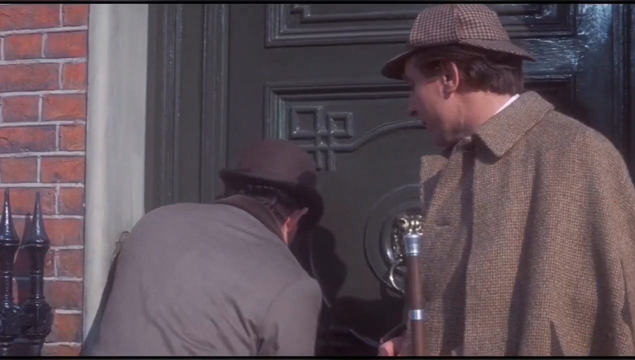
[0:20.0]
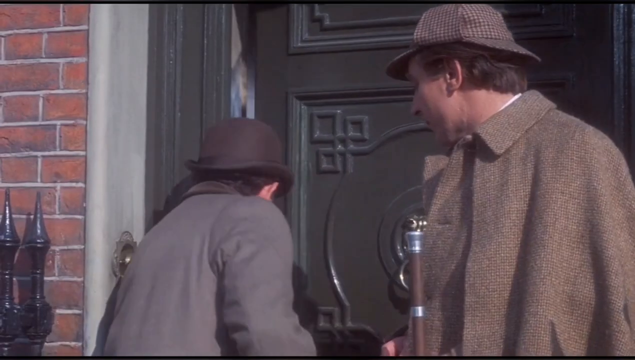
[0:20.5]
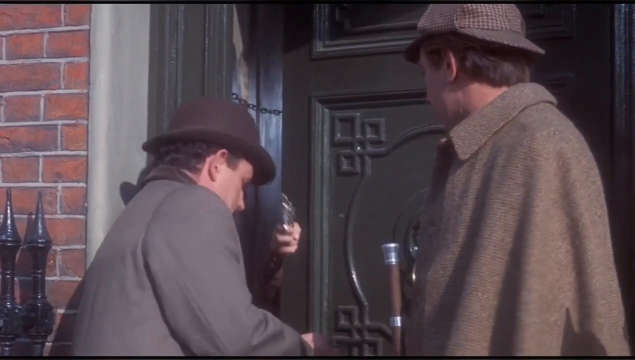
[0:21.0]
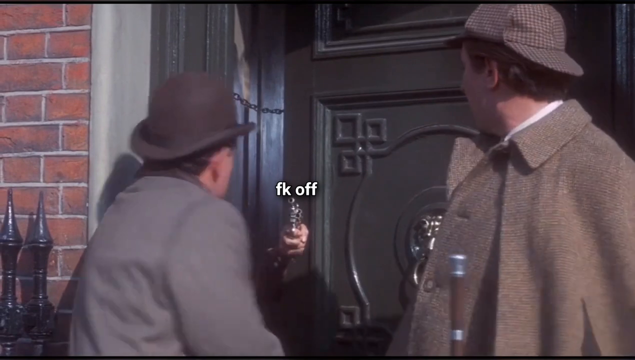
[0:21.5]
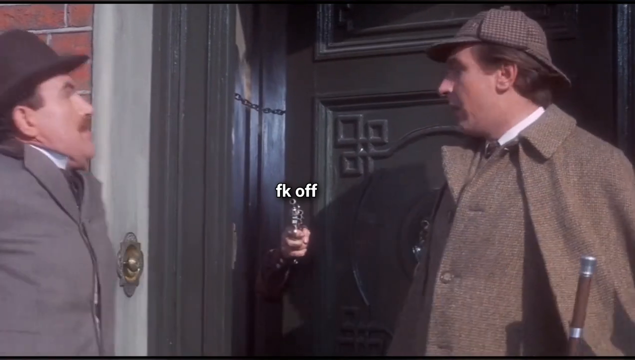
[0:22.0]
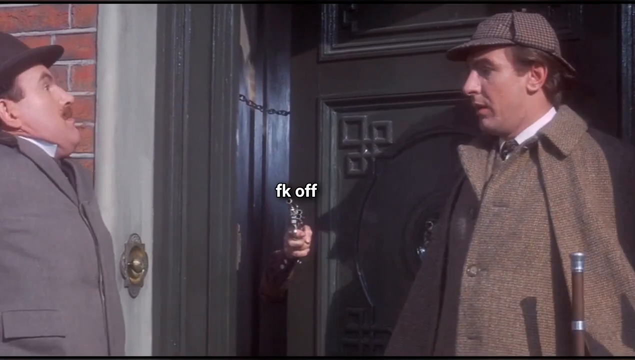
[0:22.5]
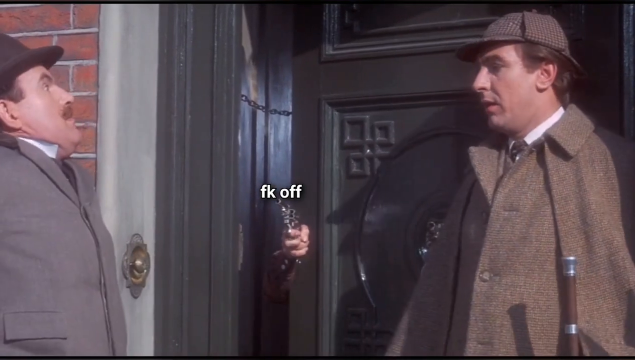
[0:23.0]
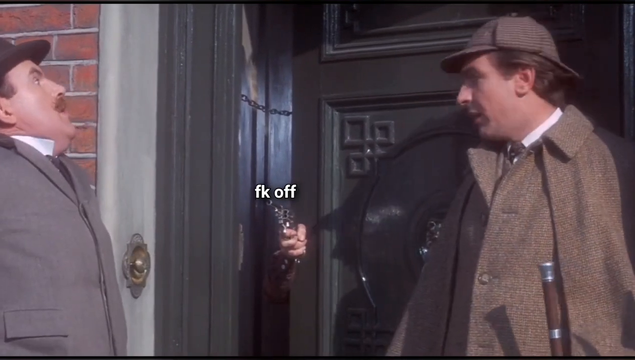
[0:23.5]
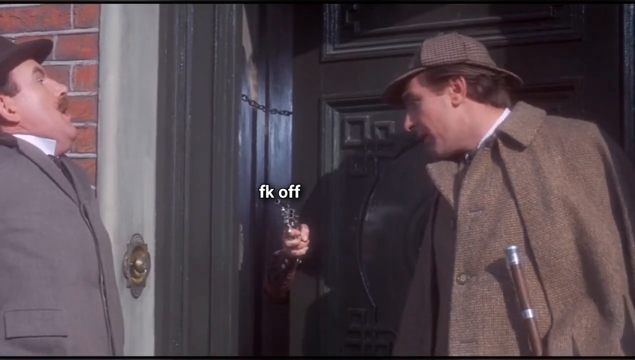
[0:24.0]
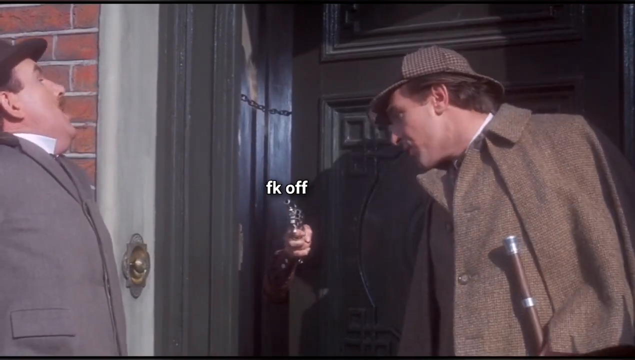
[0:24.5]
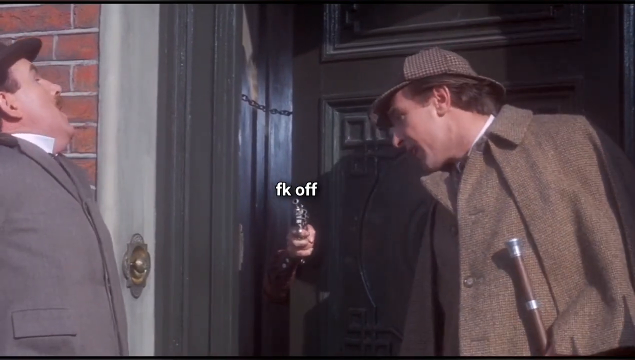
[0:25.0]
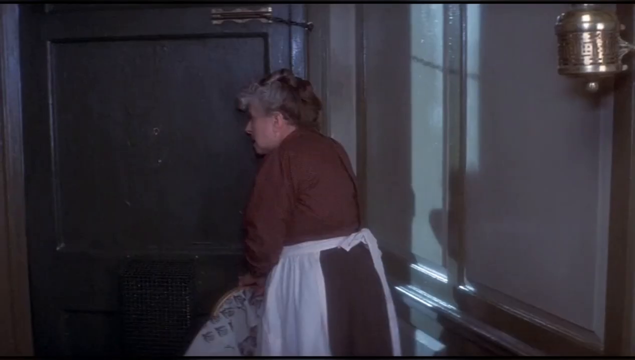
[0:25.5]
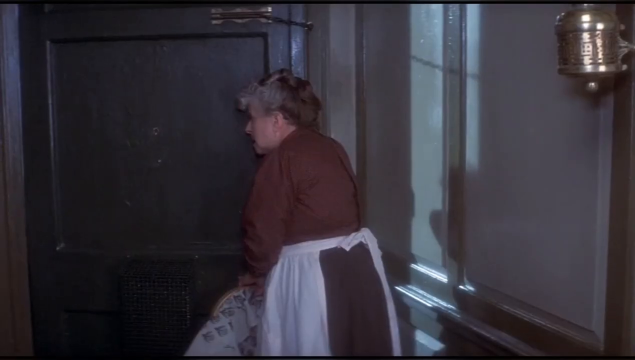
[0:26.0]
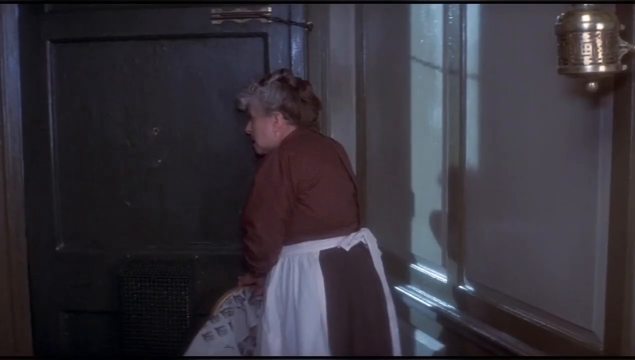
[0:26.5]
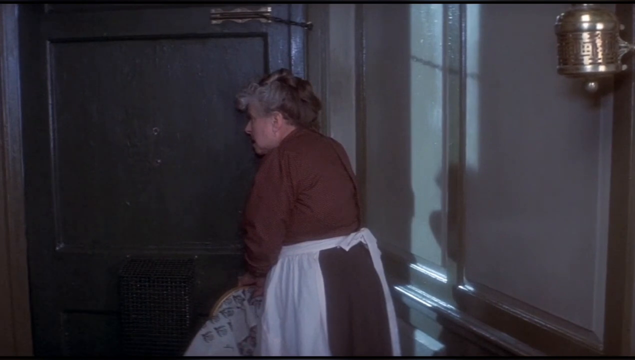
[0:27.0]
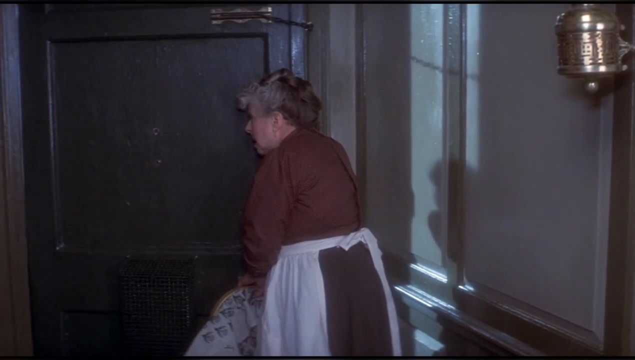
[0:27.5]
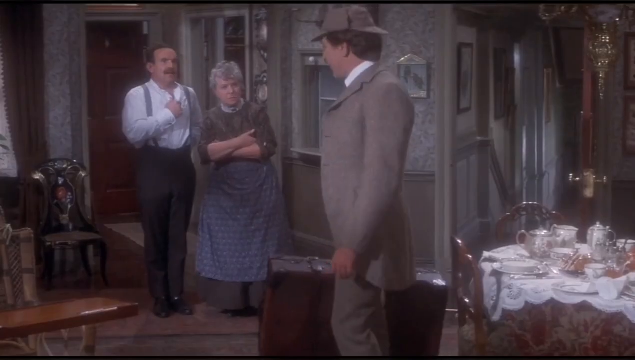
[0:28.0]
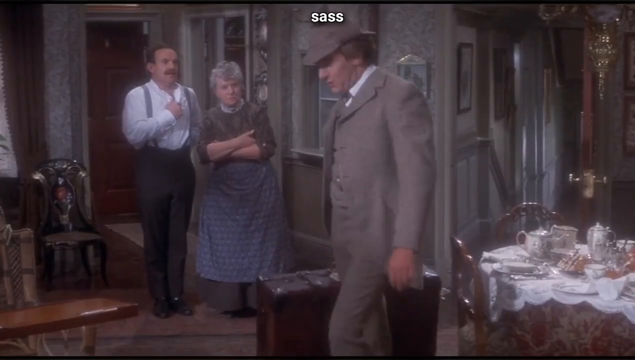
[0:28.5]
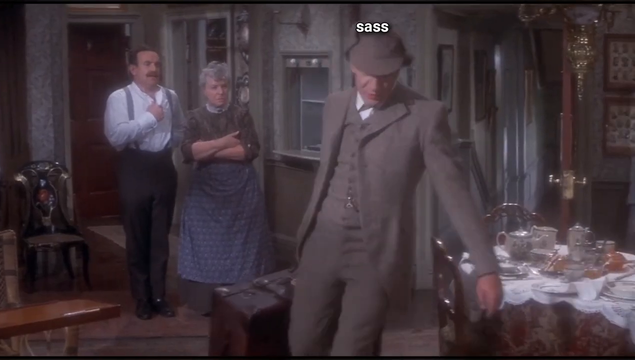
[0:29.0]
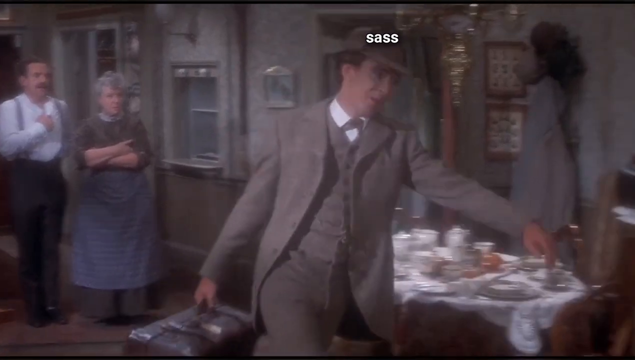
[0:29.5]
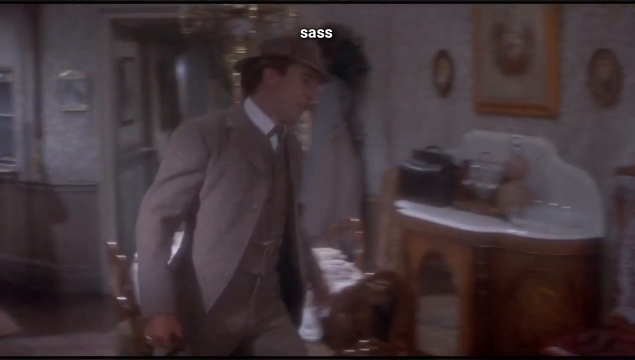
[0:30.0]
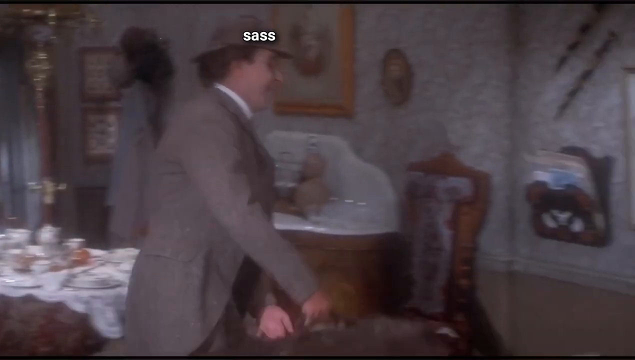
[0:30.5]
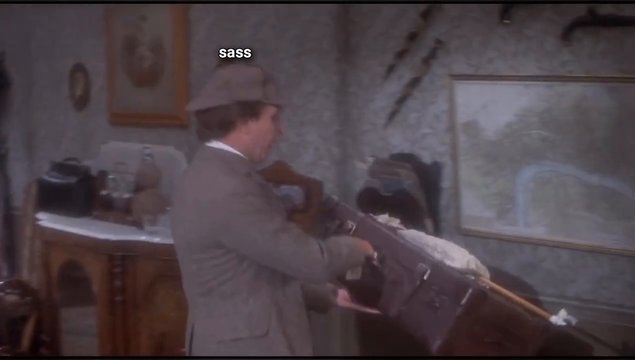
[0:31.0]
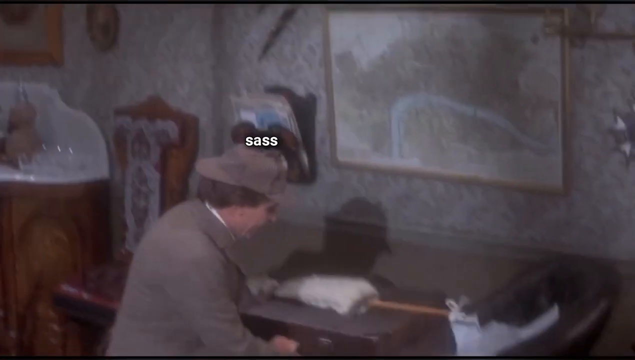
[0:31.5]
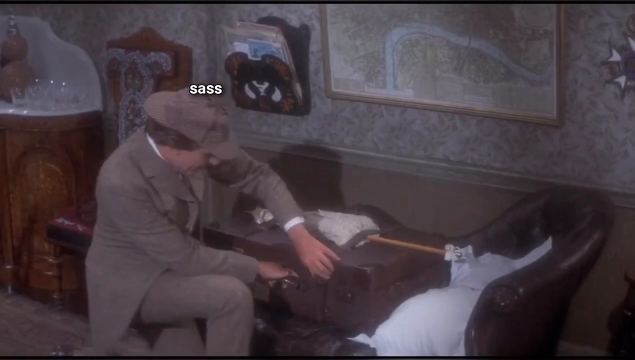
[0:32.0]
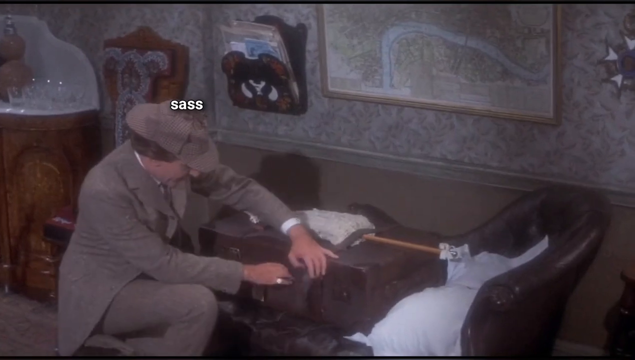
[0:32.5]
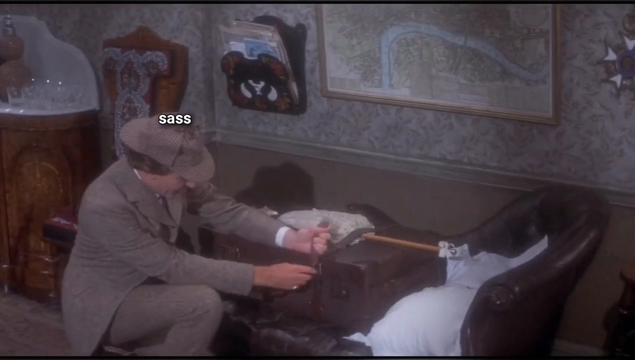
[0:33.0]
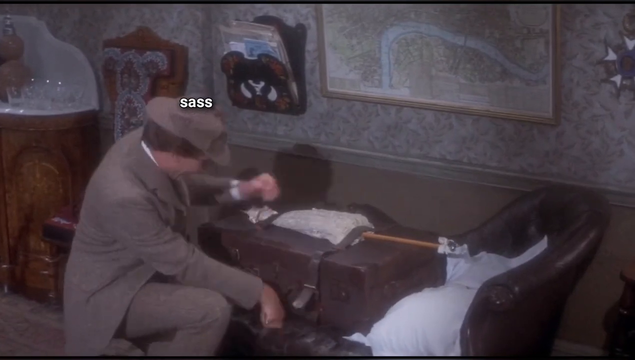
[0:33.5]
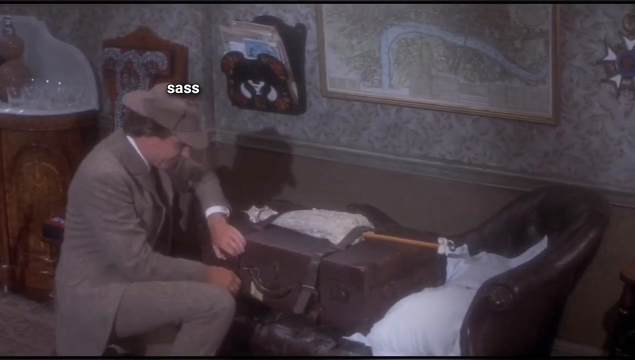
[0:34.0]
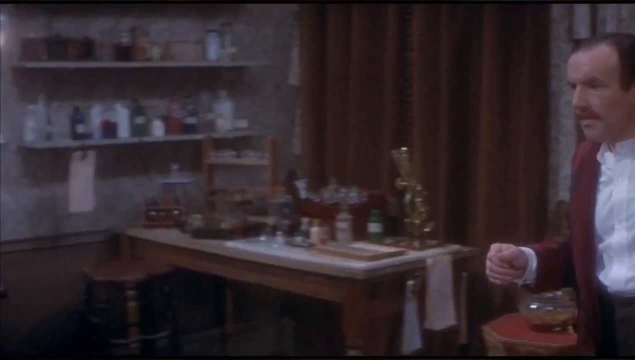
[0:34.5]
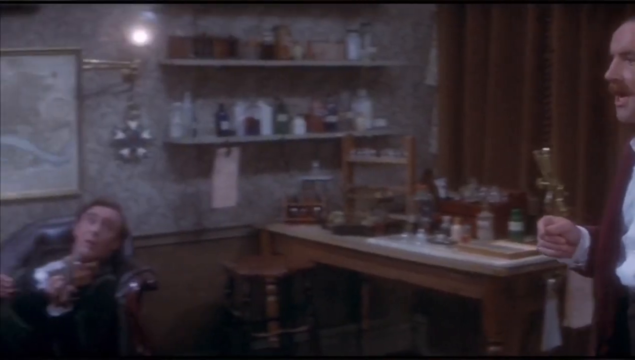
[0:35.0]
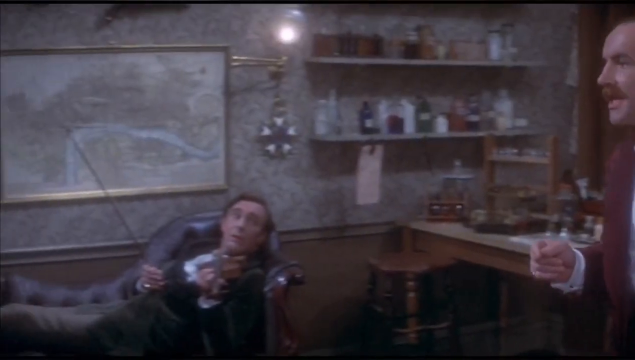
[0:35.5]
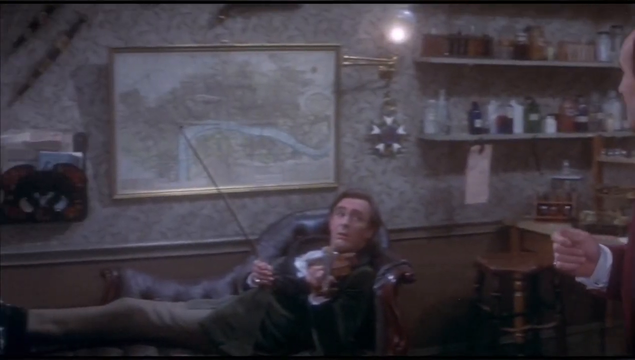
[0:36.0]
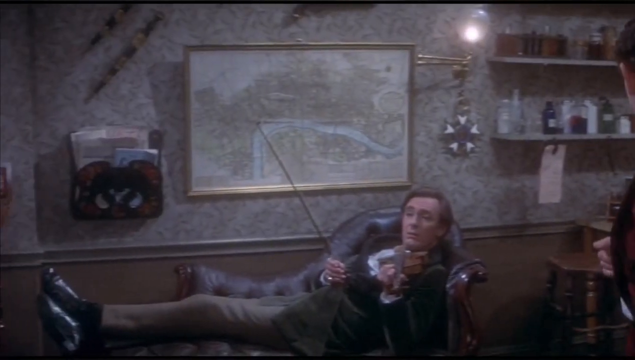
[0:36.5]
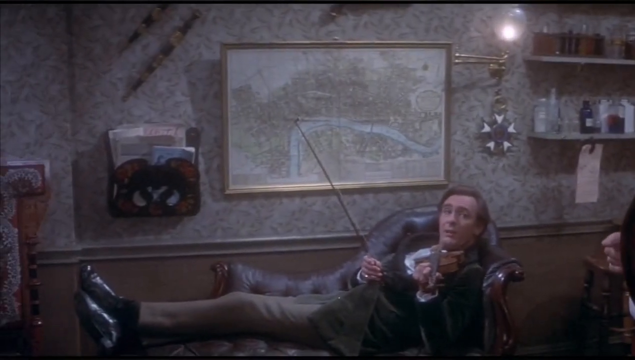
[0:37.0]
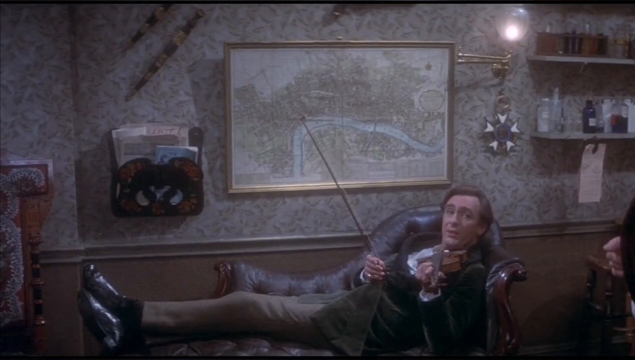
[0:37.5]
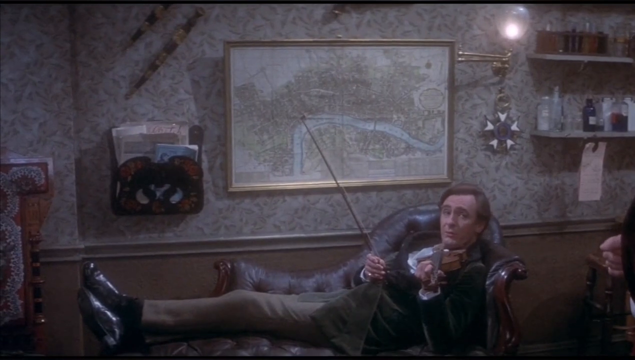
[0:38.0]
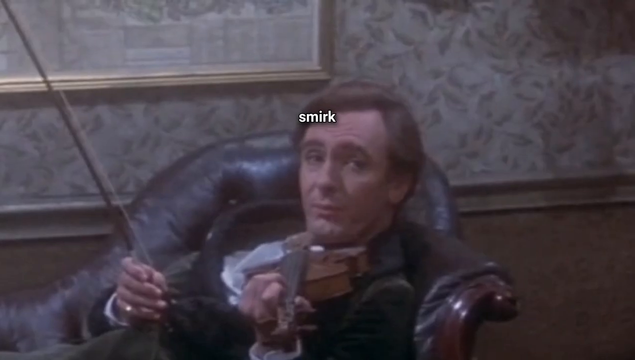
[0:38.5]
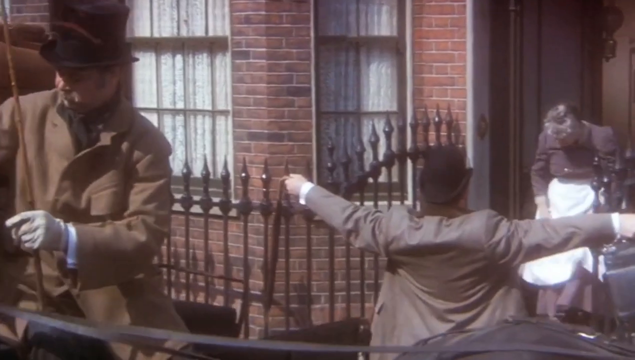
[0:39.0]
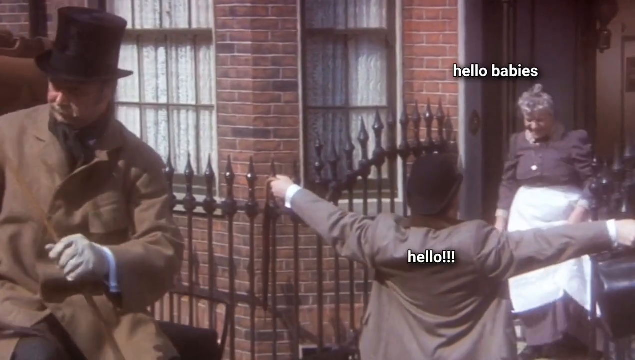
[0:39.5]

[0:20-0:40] Two gentlemen wear old-style long trench coats and caps from the old days of England with a brim on the front and back. They appear to be Sherlock Holmes and Dr. Rothschild. The house is an old-style home with a brick exterior and a very large wooden door, and there is a black wrought iron fence post. Inside, the taller gentleman unbuckles a suitcase and looks inside it. Another gentleman sitting on a couch watches him go through the suitcase; he holds some type of stick, a pointer, and points it up at a large picture on the wall. Other items hang on this wall as well.